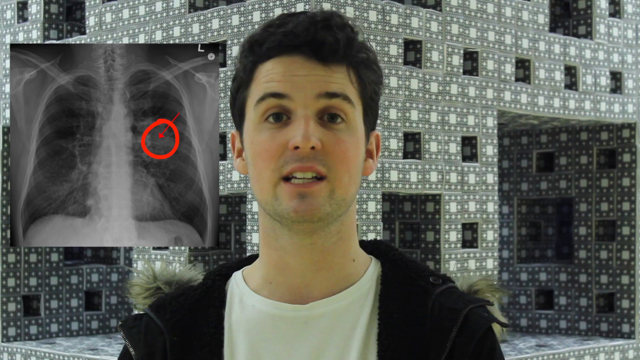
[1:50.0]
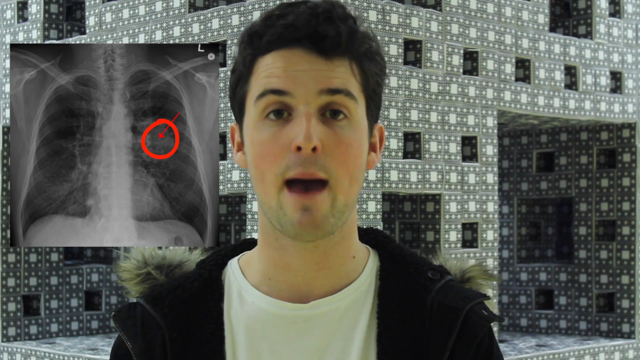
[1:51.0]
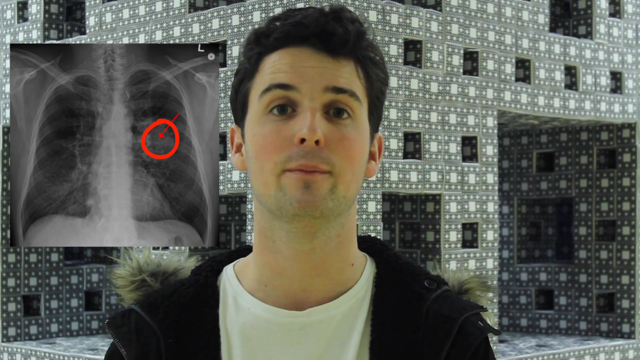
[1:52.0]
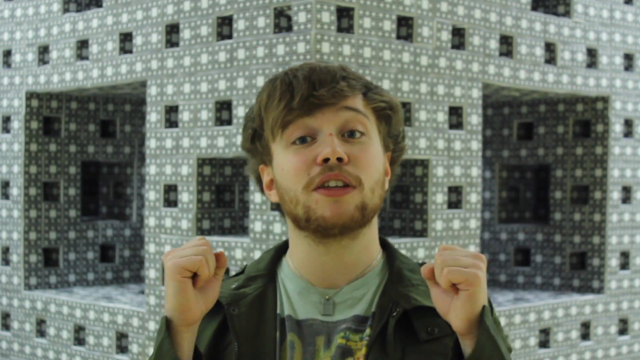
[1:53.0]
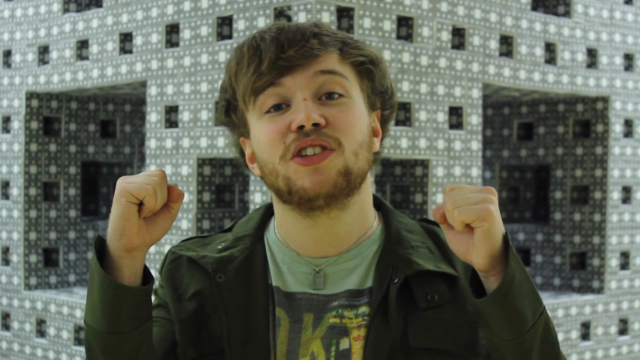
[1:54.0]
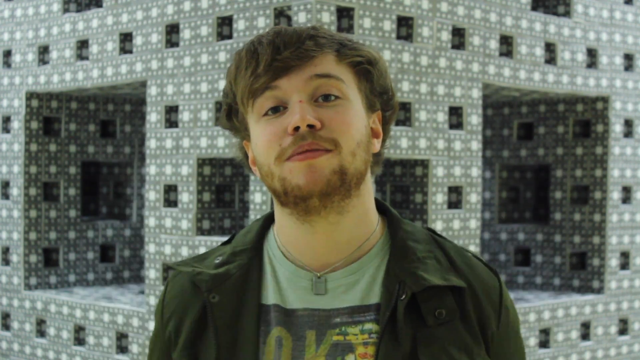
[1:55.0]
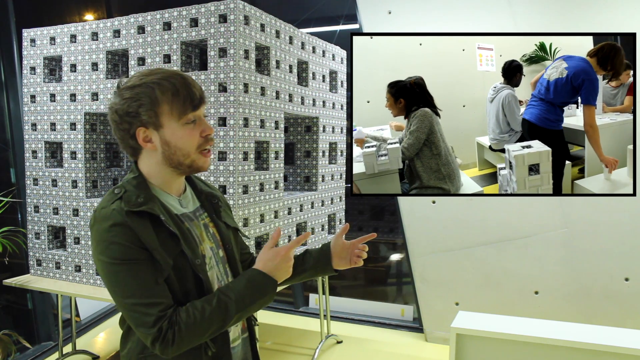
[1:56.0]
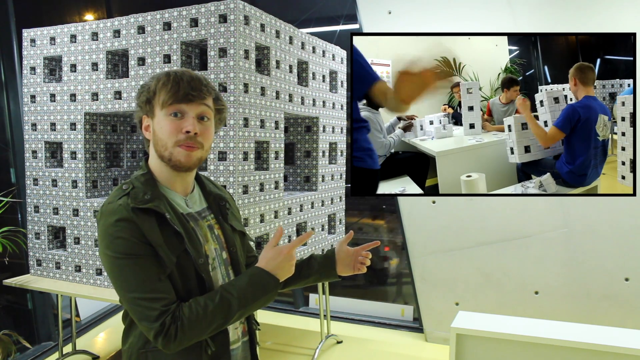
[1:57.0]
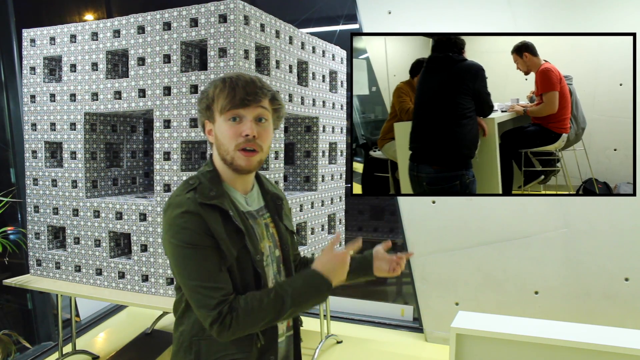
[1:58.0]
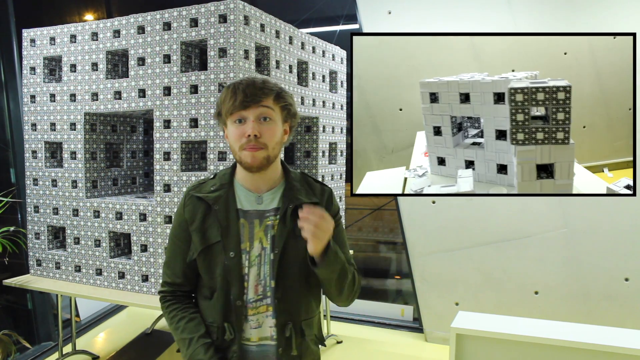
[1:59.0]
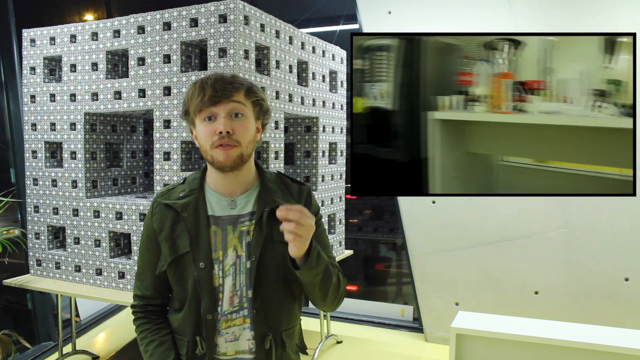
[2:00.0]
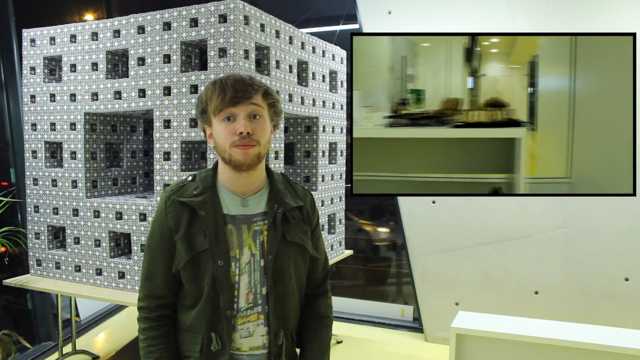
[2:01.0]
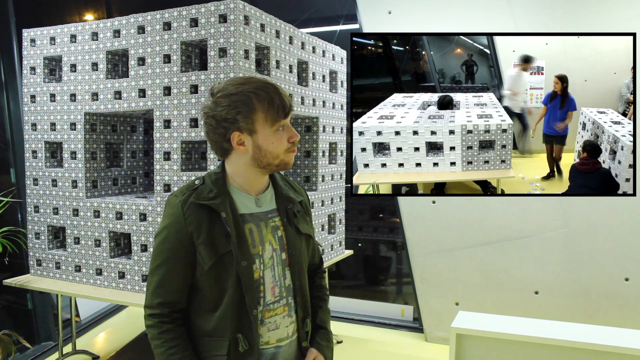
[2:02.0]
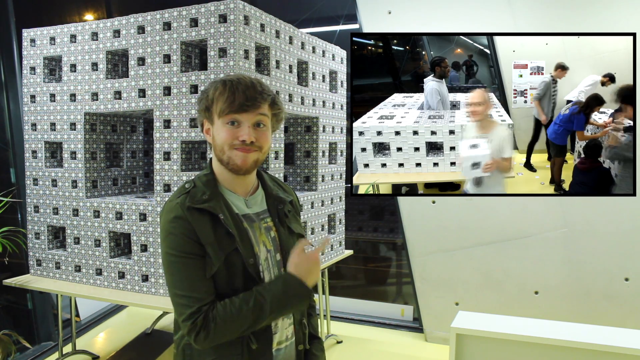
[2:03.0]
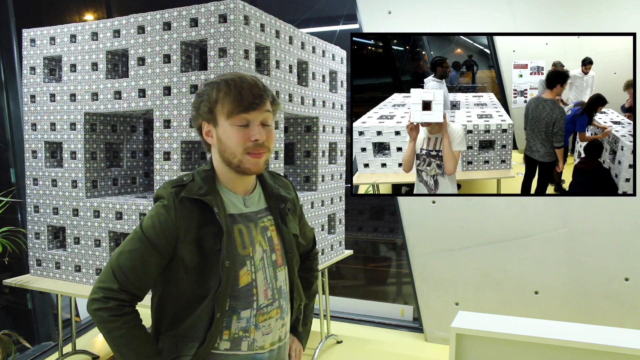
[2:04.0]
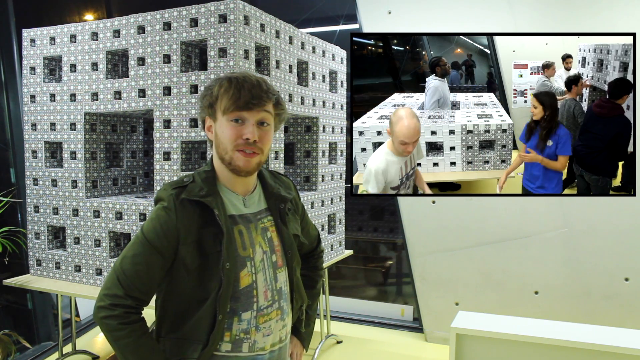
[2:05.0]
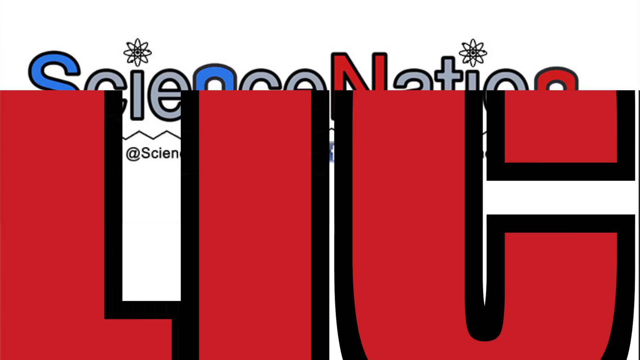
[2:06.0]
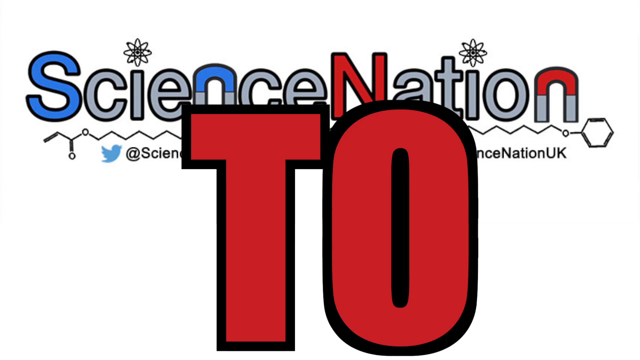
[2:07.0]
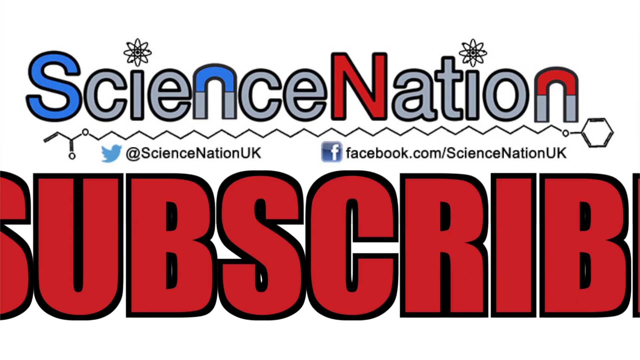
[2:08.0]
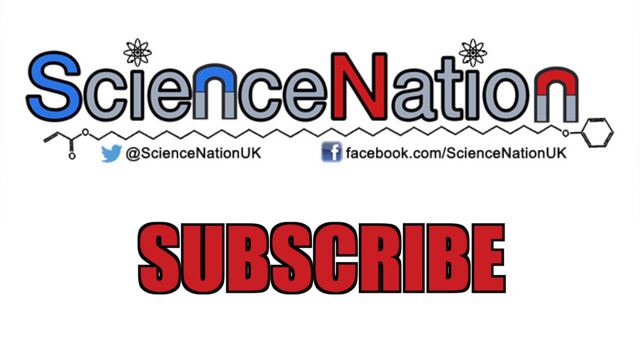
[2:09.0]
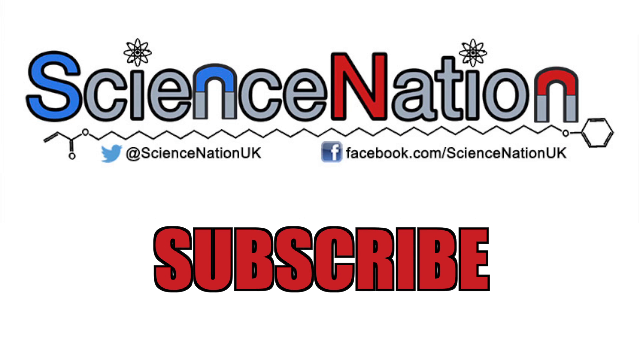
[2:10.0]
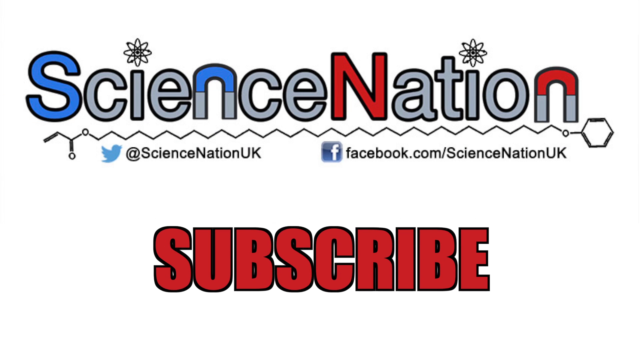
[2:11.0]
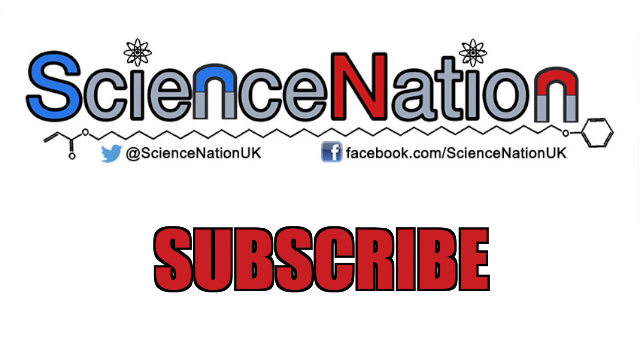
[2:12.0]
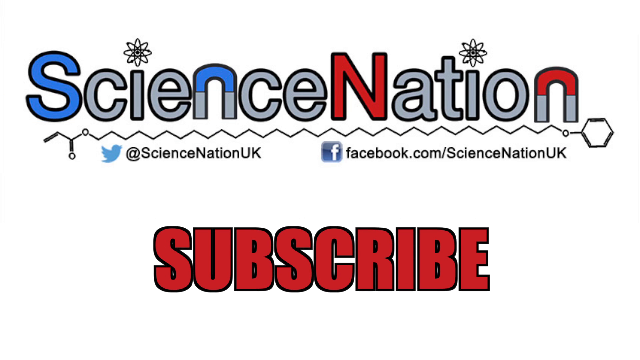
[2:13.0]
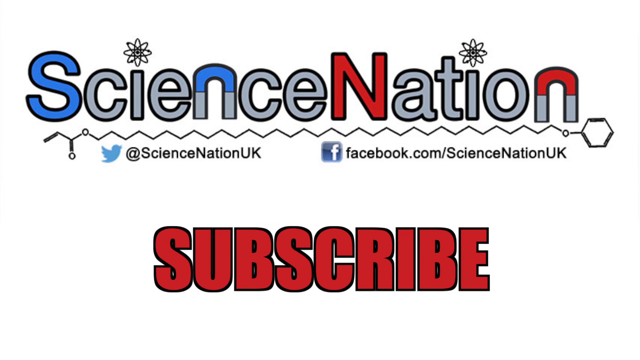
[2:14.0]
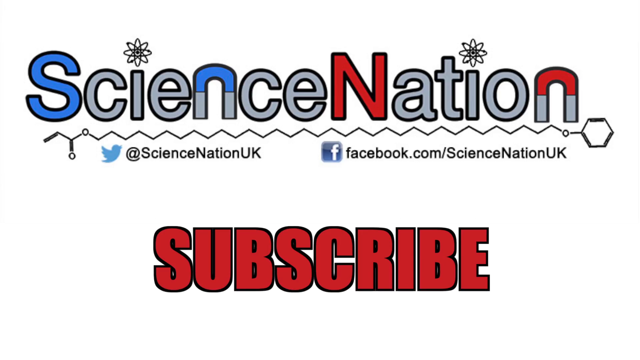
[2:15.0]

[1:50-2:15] An X-ray of a rabbit is shown, followed by a laboratory of young men and women working on 3D animations, putting up structures and edifices of projects they are working on.